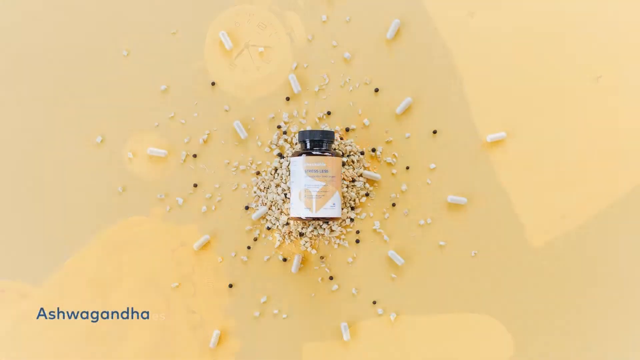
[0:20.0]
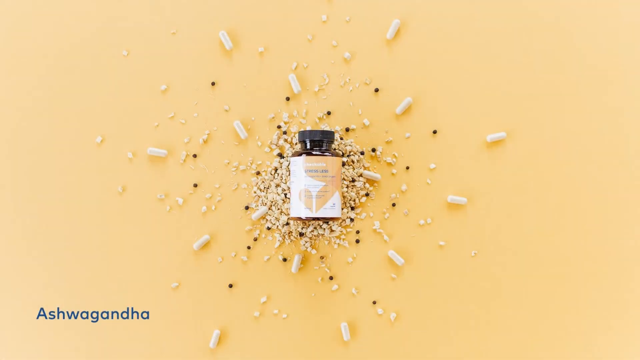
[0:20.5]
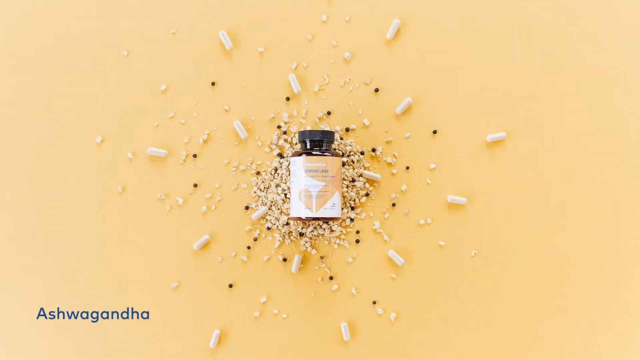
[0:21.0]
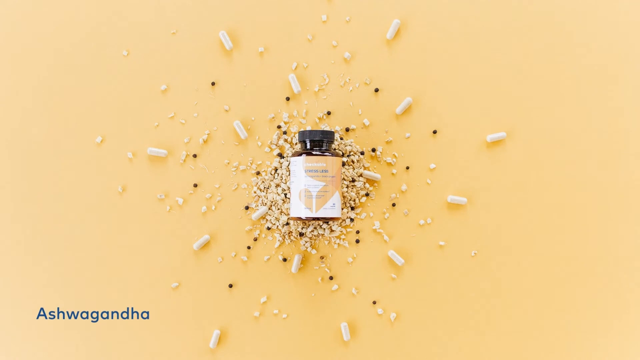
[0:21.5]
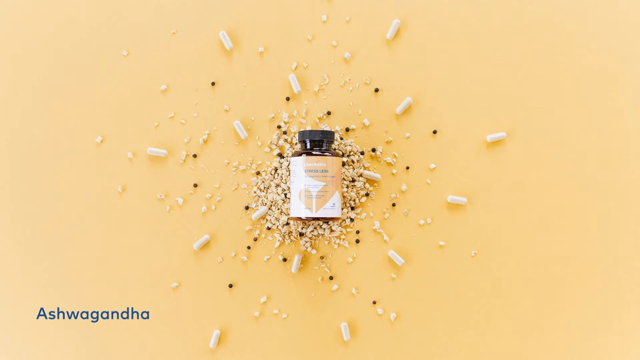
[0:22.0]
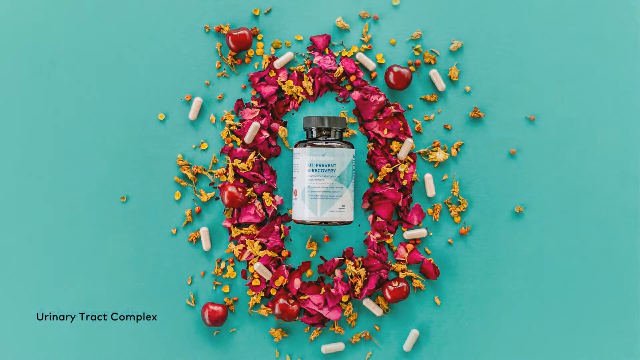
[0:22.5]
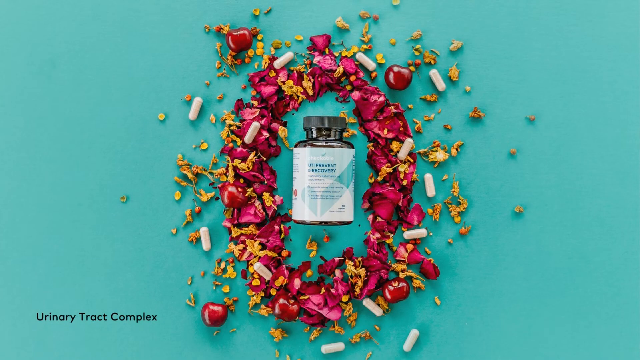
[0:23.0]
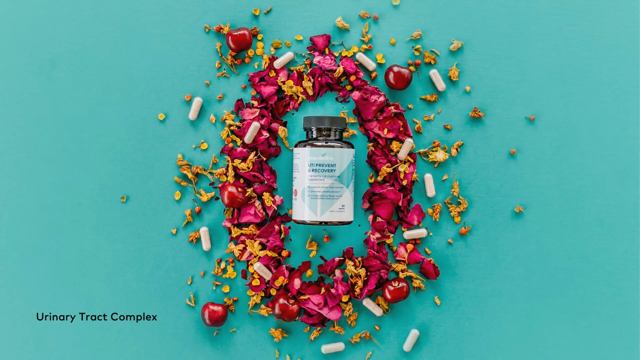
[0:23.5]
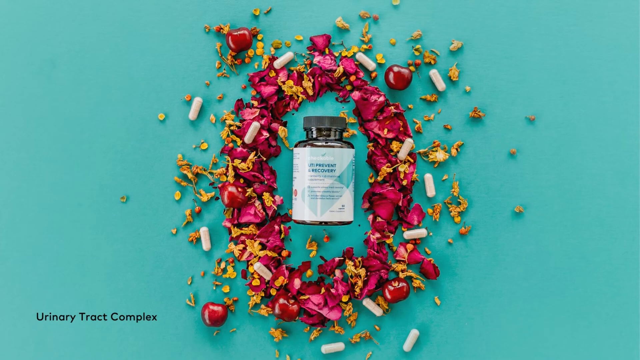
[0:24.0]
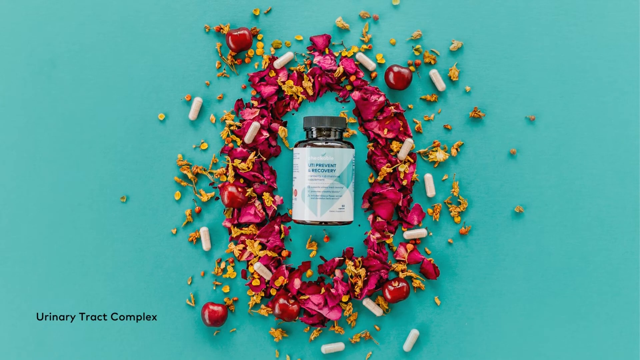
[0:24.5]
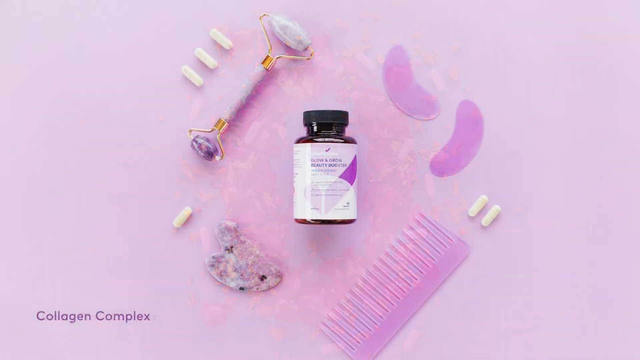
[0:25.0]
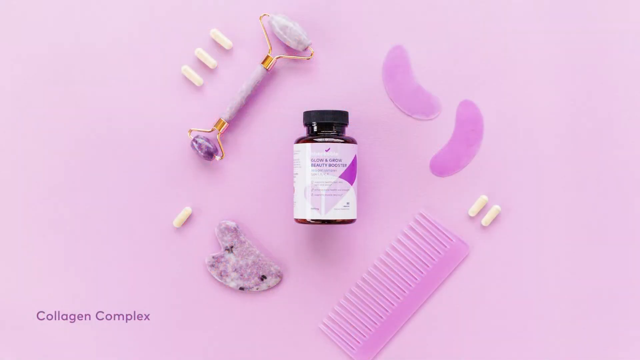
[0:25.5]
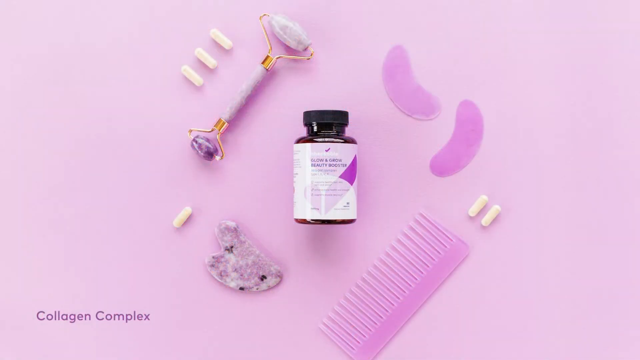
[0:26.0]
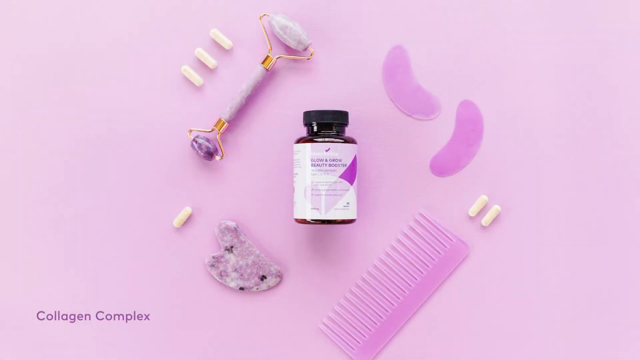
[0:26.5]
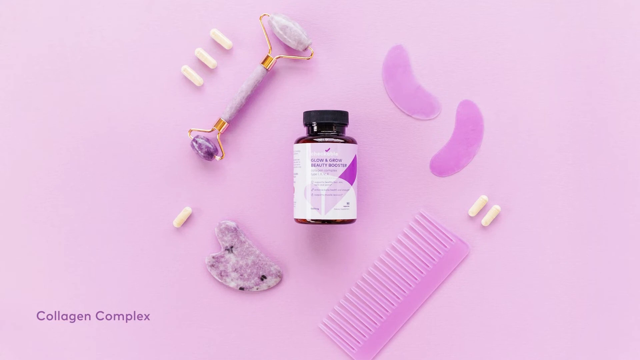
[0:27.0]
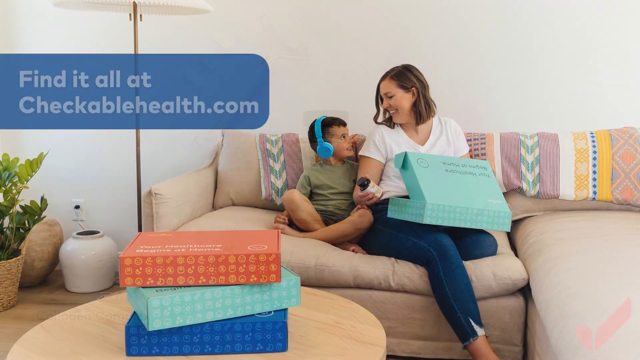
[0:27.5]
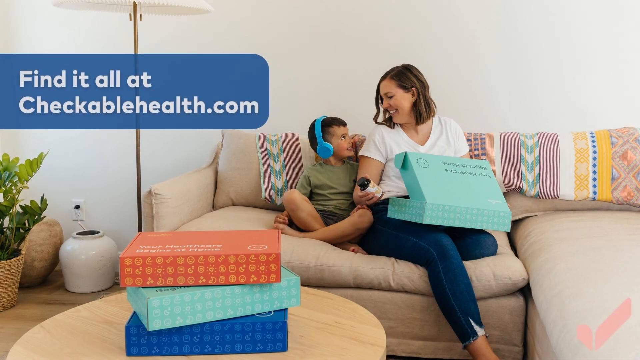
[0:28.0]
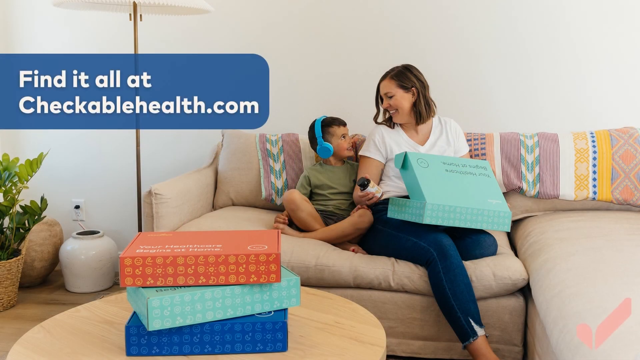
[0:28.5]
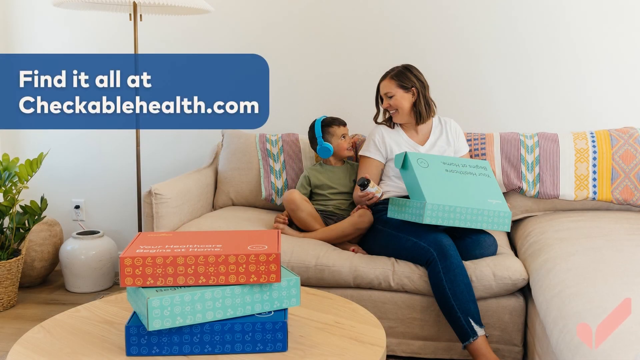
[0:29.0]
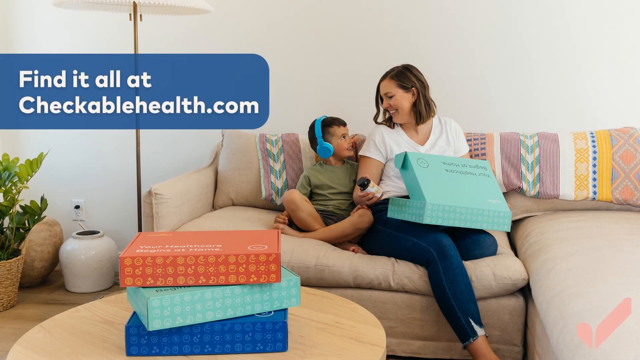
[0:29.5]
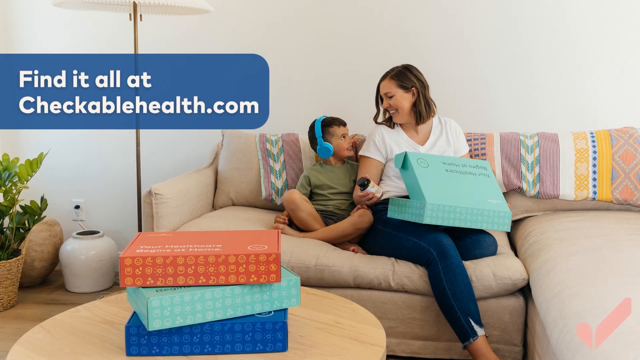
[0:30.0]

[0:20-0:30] Items in different colors appear with things surrounding them: one yellowish, one reddish, and one purple. The yellow one has pills next to it and possibly seeds. The red one has a blue background with red things around it, which could be rose petals, and it is in a bottle that is more of a teal color, with pills around it as well. The purple one is more like lavender, with a lavender-colored bottle, and a face implement, some under-eye patches, a comb, and pills are laying around it.